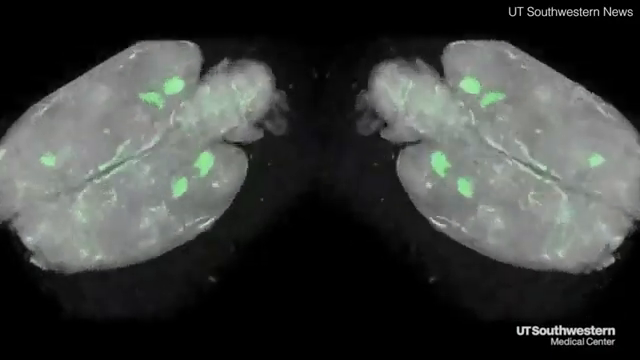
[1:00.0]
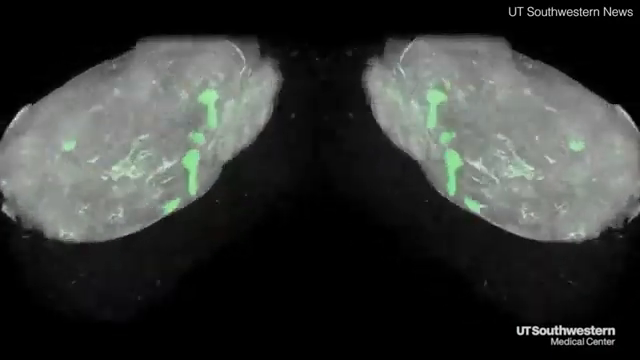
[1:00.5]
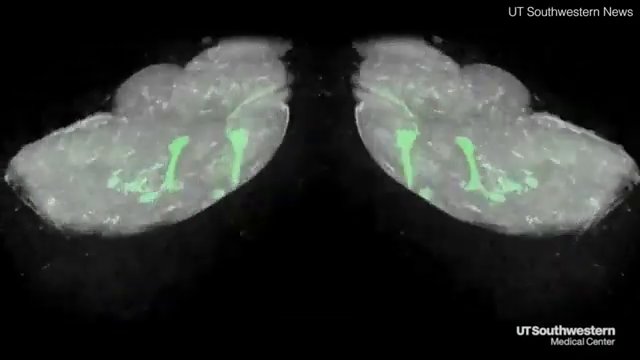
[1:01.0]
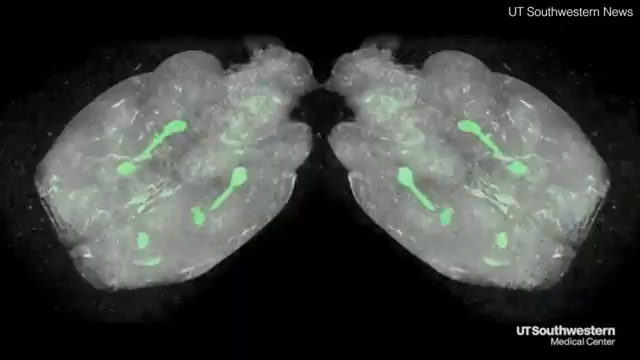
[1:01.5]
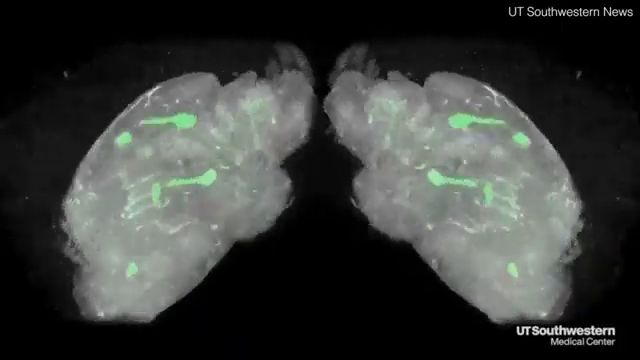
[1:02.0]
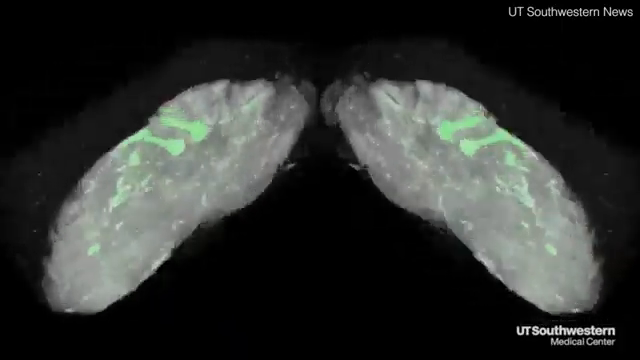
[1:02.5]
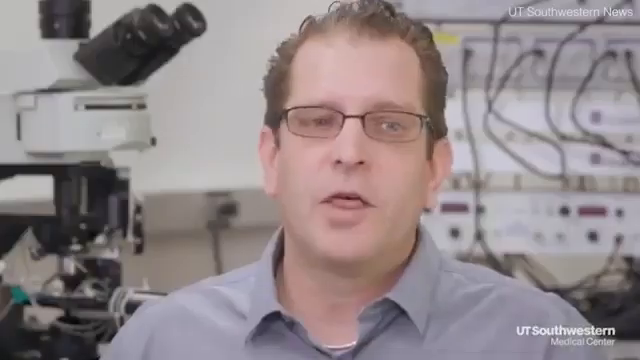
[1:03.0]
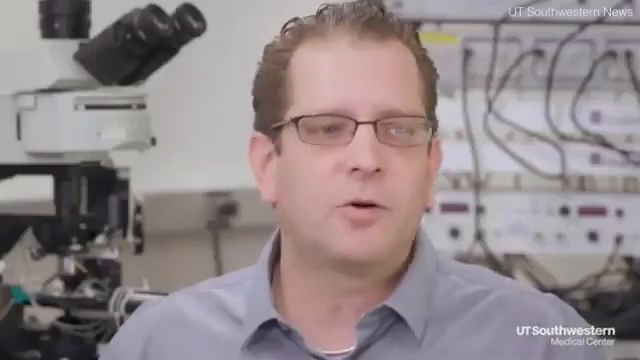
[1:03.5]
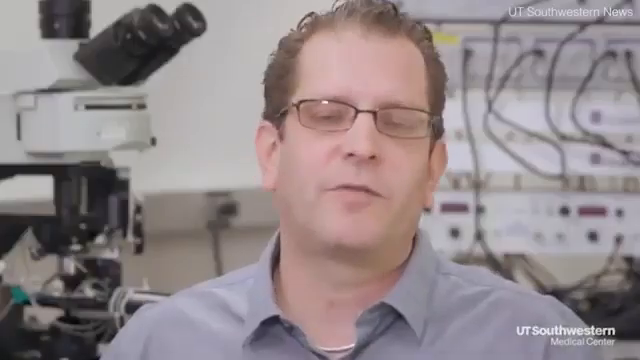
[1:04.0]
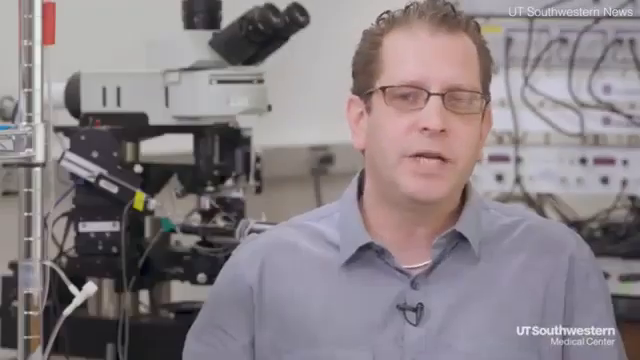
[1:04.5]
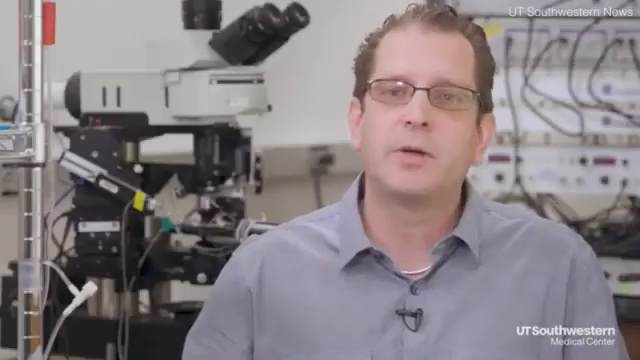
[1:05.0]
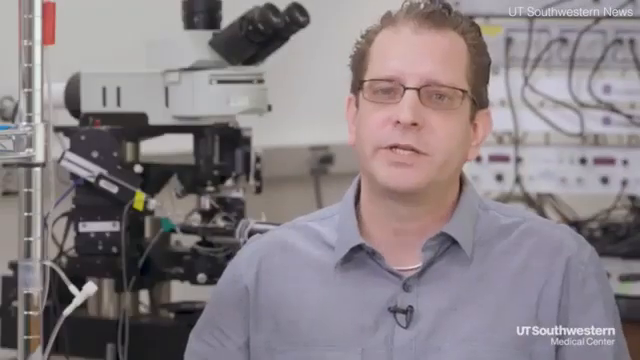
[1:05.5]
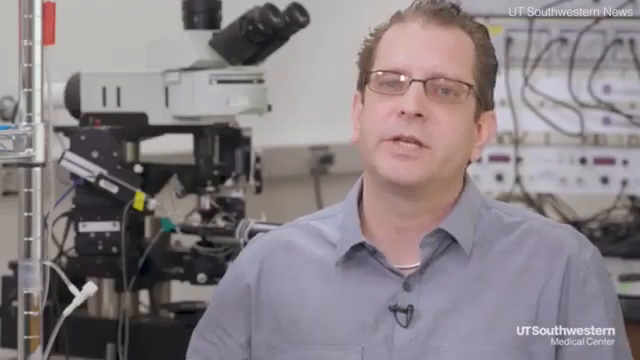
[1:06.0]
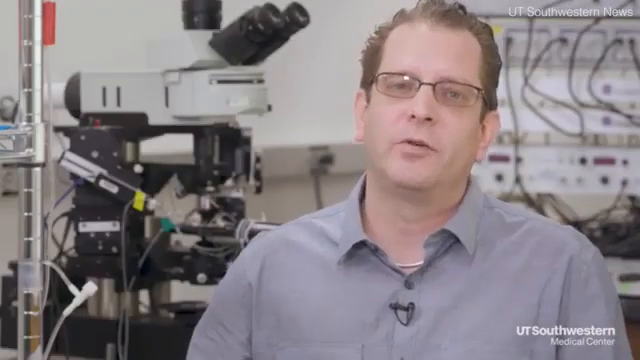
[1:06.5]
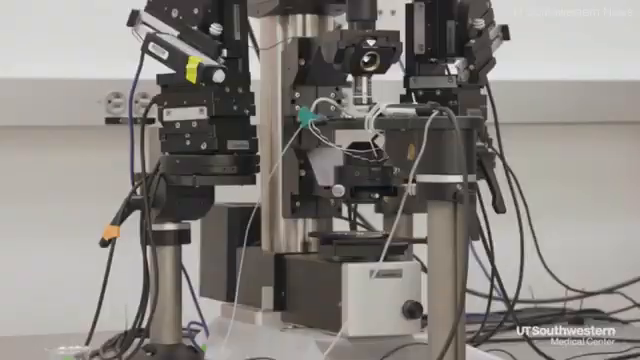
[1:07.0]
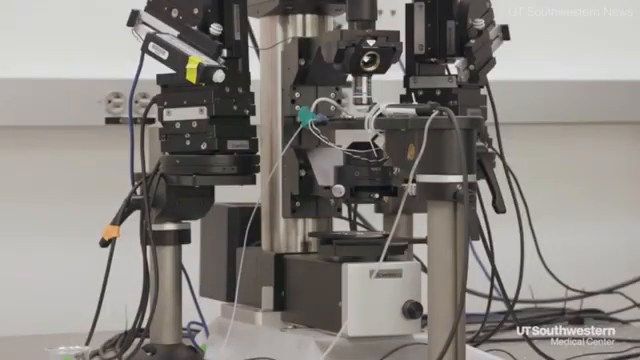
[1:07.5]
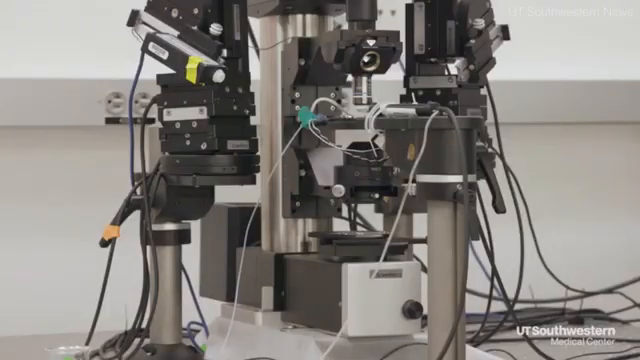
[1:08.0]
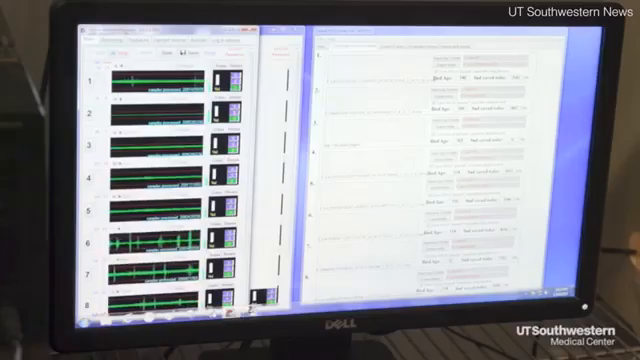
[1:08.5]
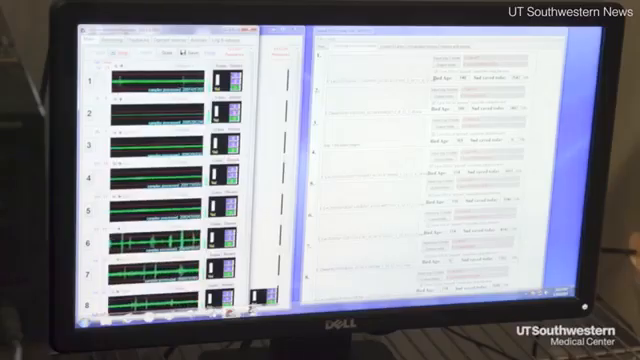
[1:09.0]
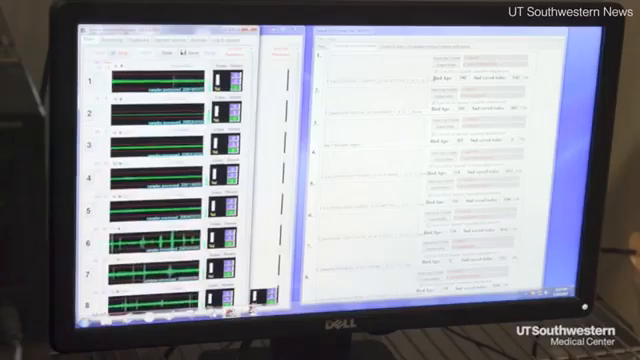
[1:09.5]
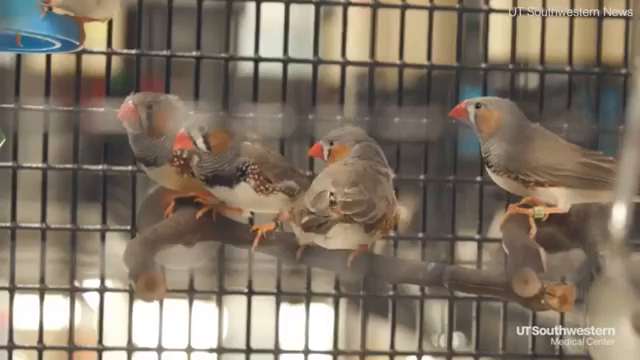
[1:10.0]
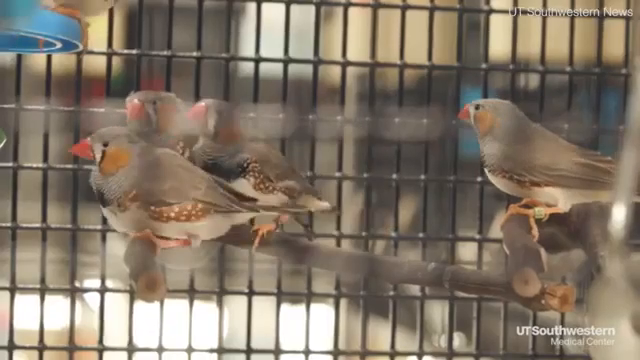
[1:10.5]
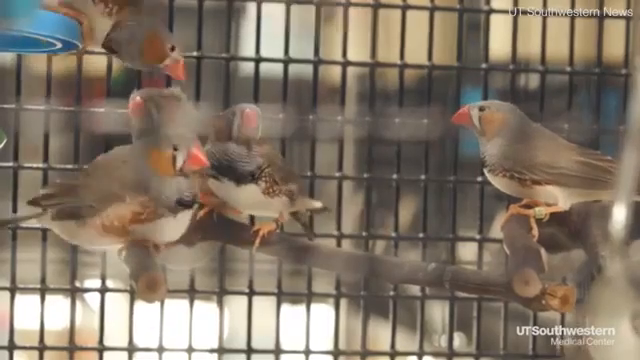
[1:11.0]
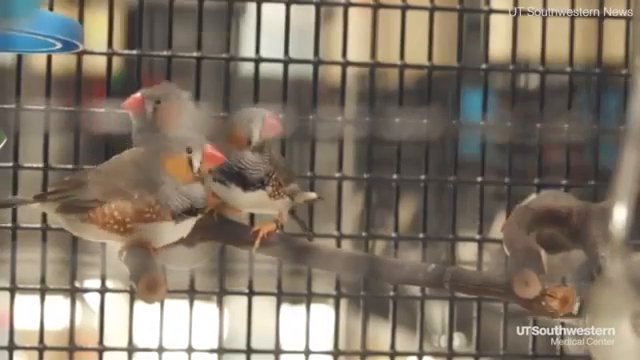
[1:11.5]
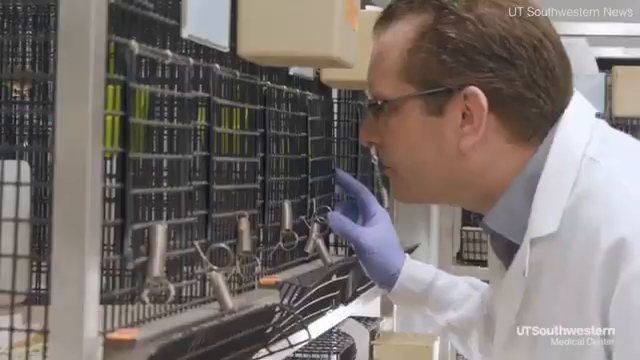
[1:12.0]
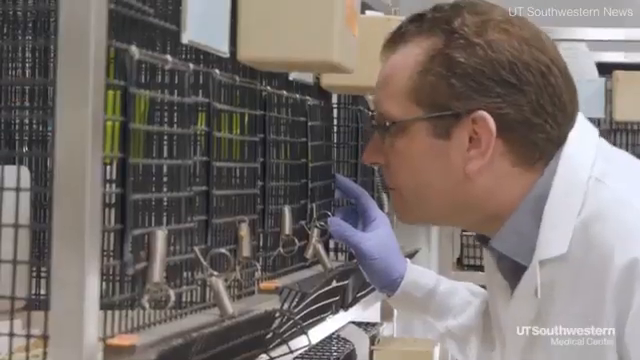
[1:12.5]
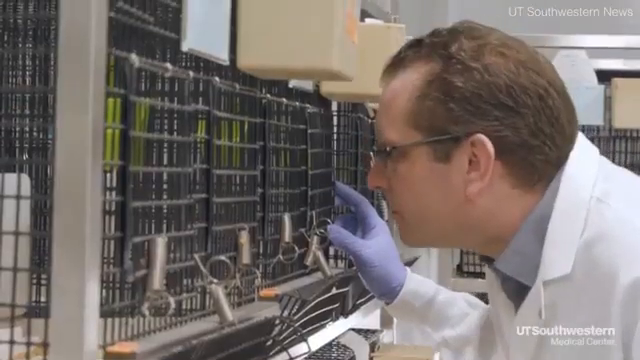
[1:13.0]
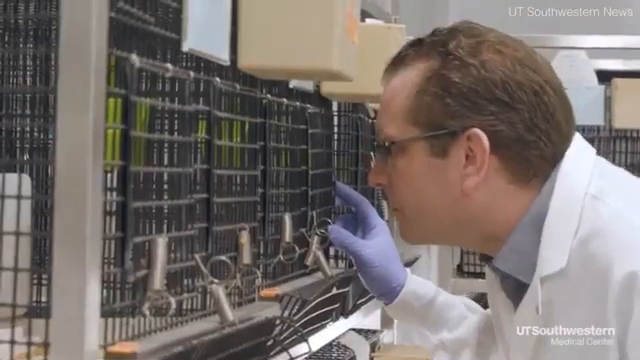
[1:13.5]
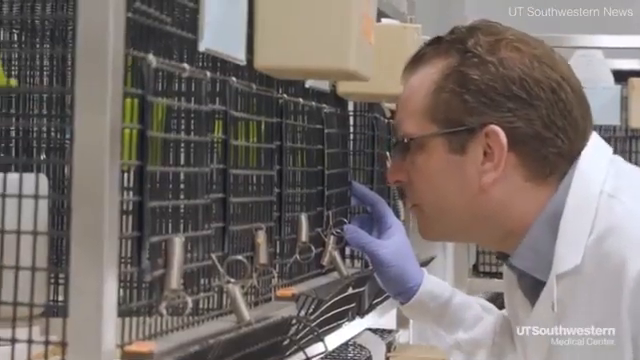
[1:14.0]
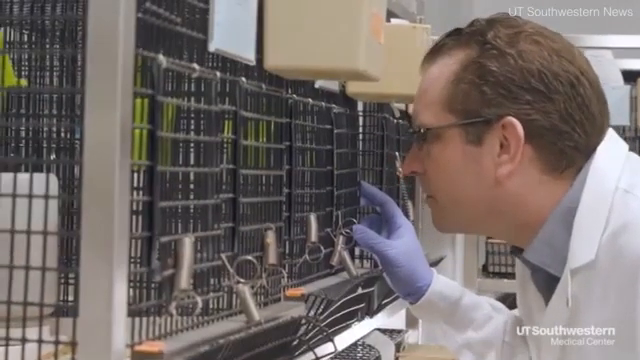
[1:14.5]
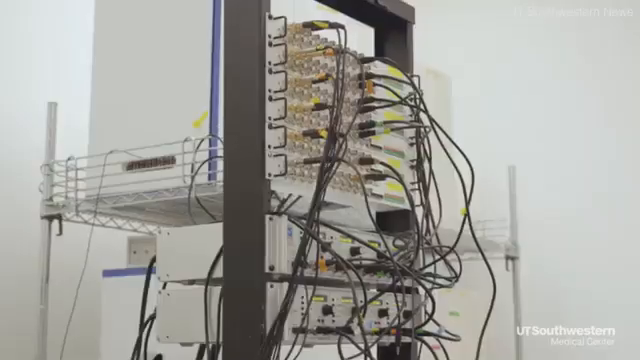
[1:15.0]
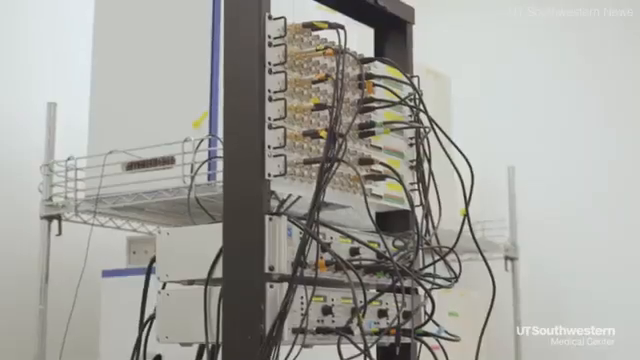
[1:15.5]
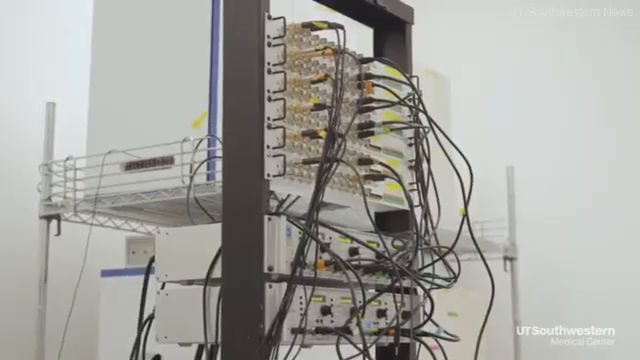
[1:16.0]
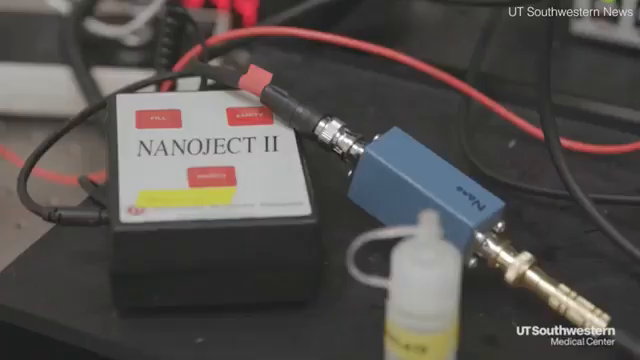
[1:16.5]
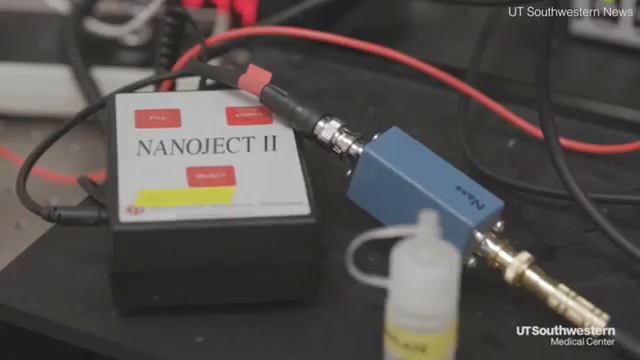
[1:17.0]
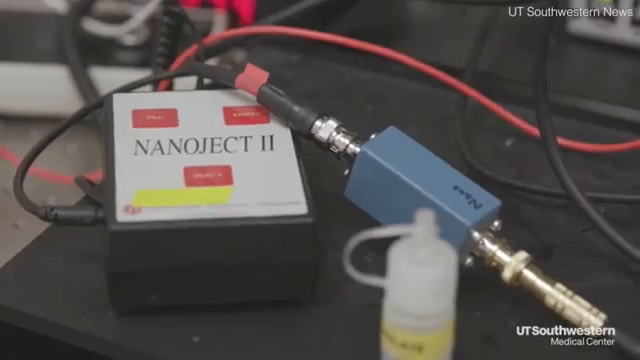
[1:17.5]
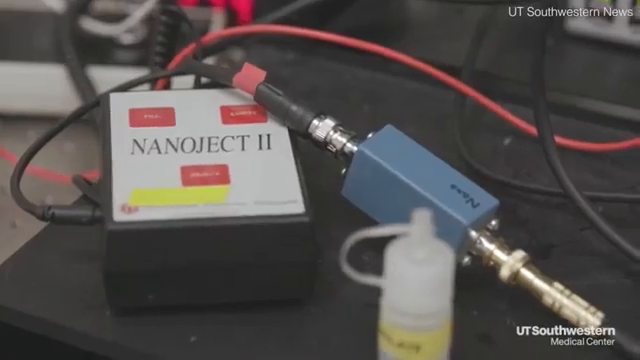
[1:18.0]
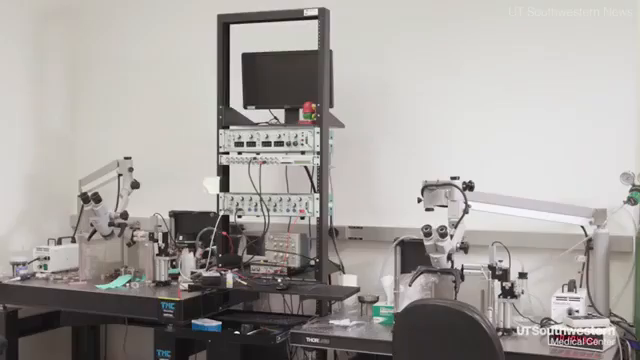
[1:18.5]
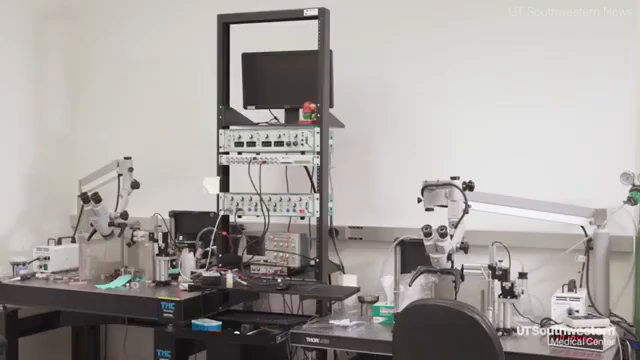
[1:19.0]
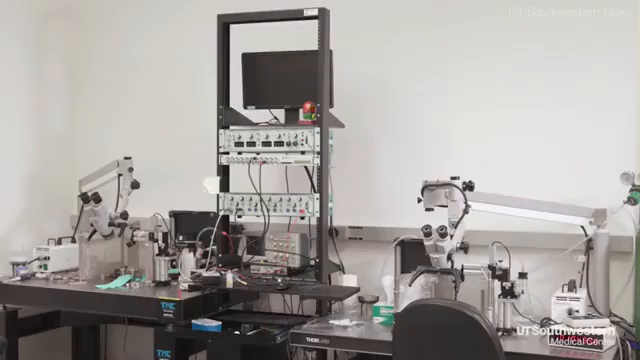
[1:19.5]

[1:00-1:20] The image still shows what looks like green lungs viewed through what seems to be a microscope; the image is black and white but has light green splotches on it. The image rotates so it can be seen 360 degrees. The view switches back to the professor talking in his lab, then to what looks like a very high-powered, complicated machine with a whole bunch of wires and stands, where the camera is partly visible. At first glance it almost looks like a bunch of video cassette tapes stacked on each other, but it is not; what it is remains unclear, though it has varying levels in it. Another computer program appears on the screen, showing several recordings, at least eight, each with a little green indicator flashing. The first four seem to be flat, while the rest seem to show noise. The view then switches back to the birds in the cage on the perch.